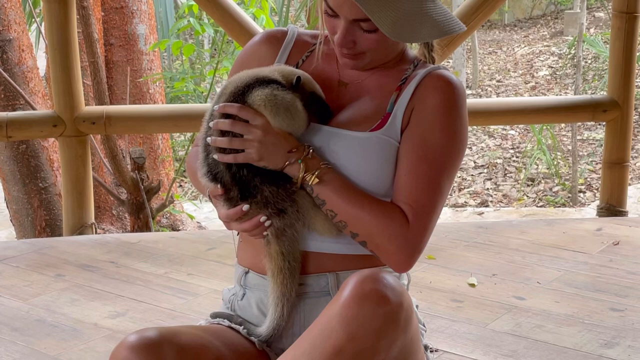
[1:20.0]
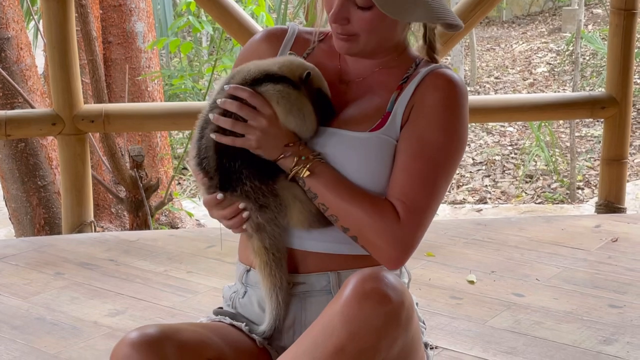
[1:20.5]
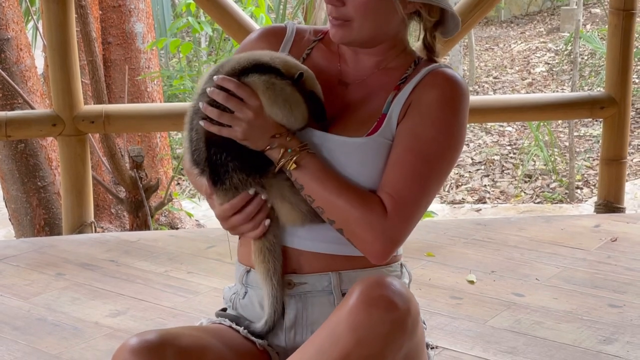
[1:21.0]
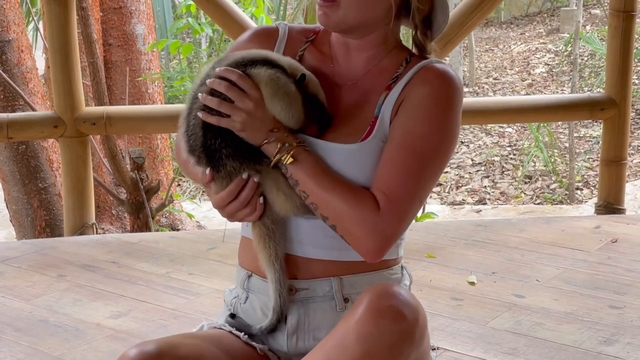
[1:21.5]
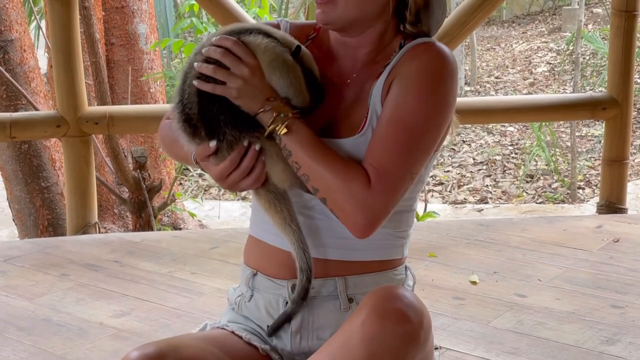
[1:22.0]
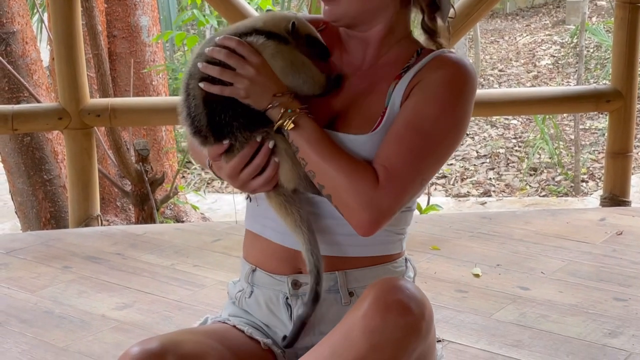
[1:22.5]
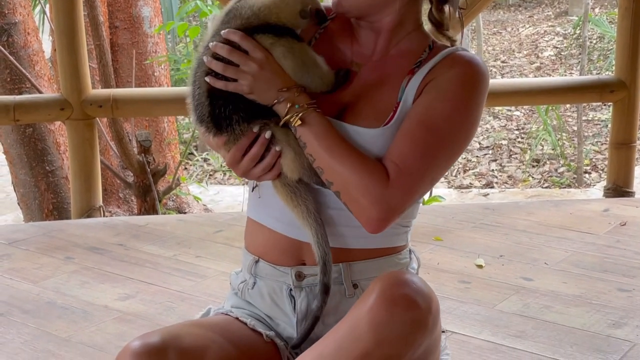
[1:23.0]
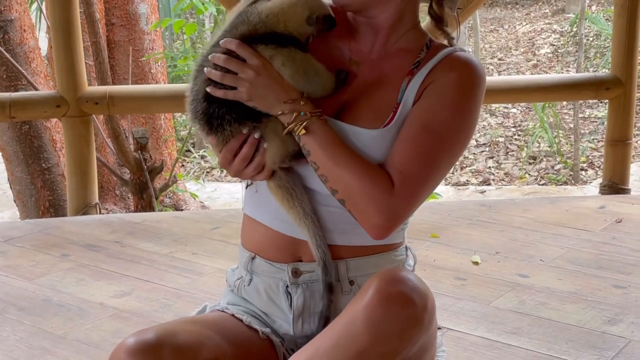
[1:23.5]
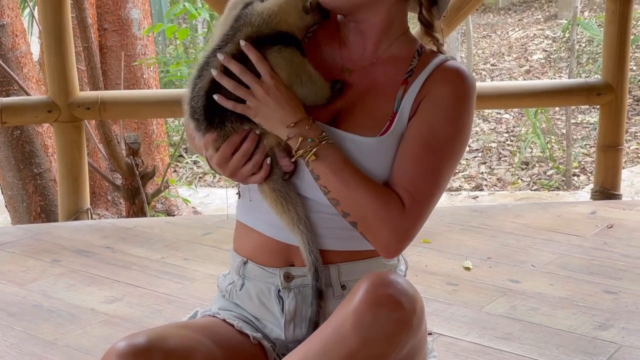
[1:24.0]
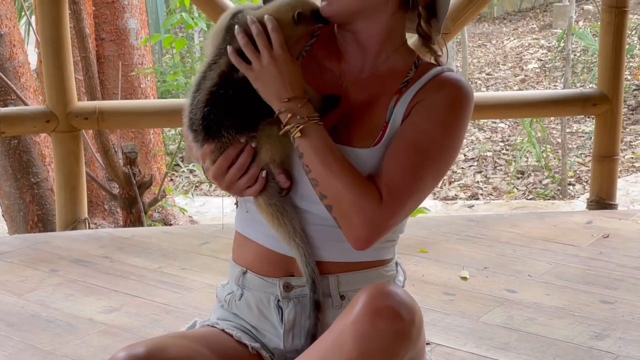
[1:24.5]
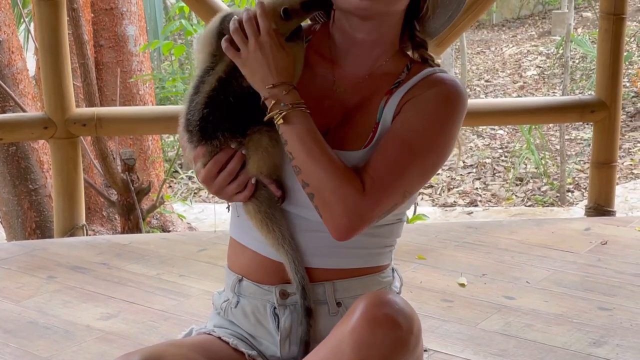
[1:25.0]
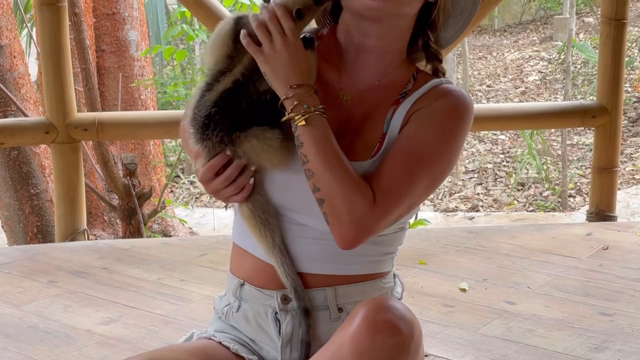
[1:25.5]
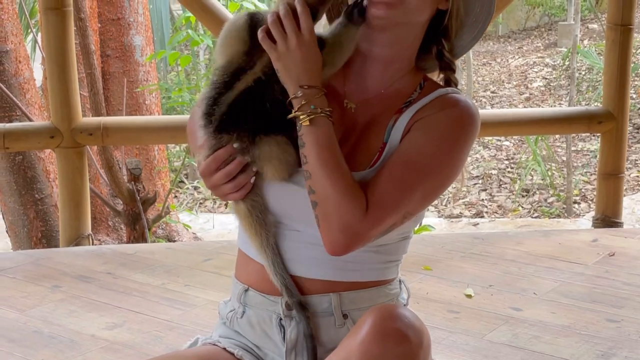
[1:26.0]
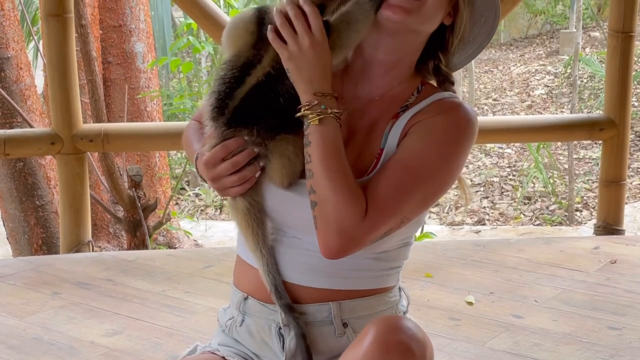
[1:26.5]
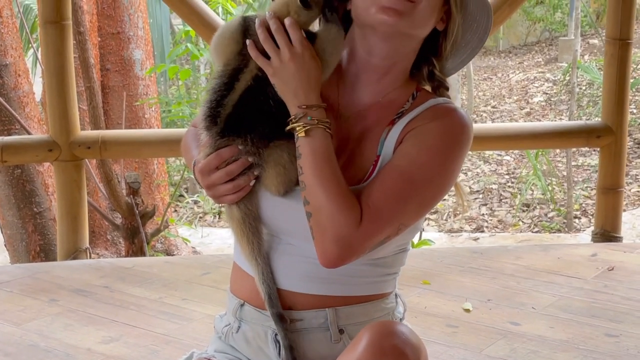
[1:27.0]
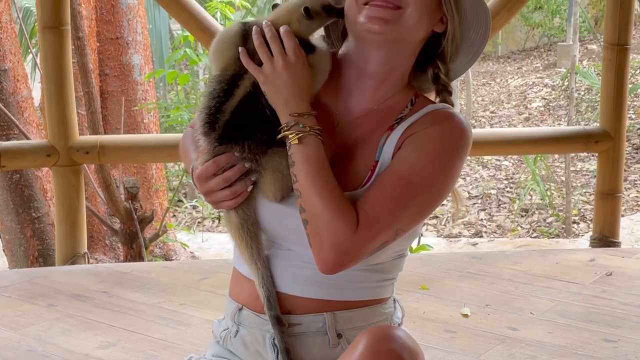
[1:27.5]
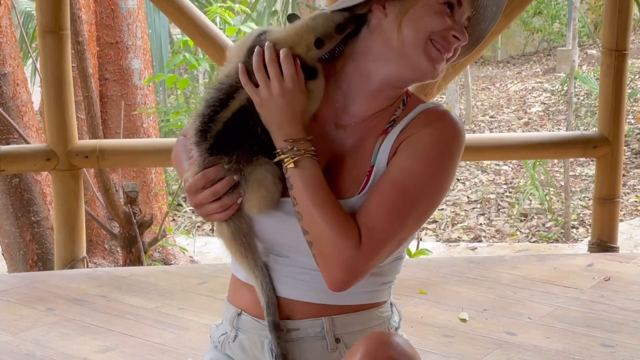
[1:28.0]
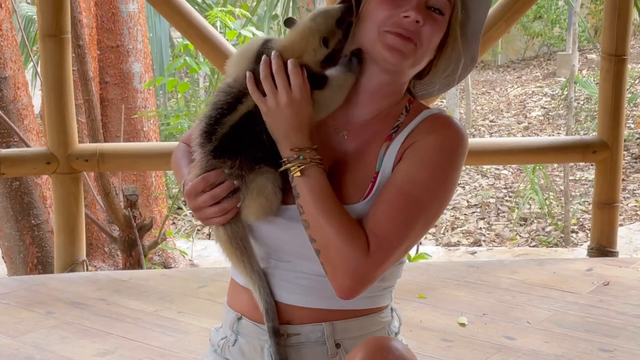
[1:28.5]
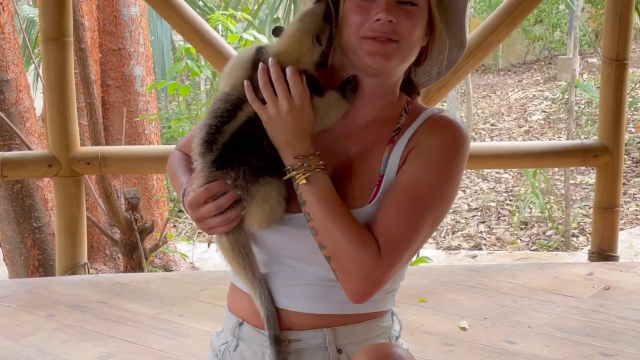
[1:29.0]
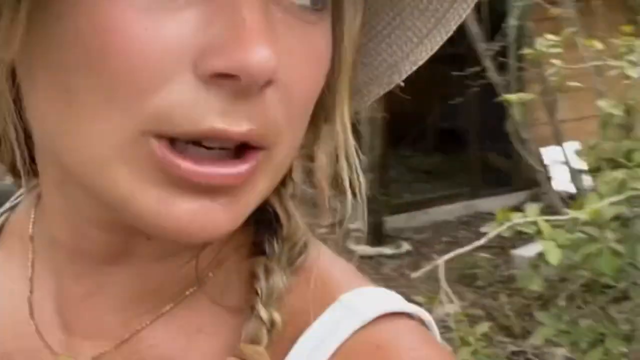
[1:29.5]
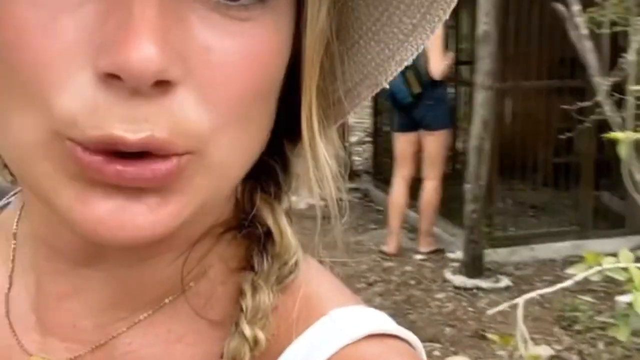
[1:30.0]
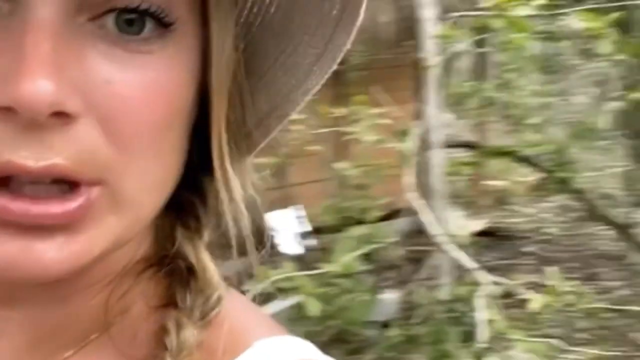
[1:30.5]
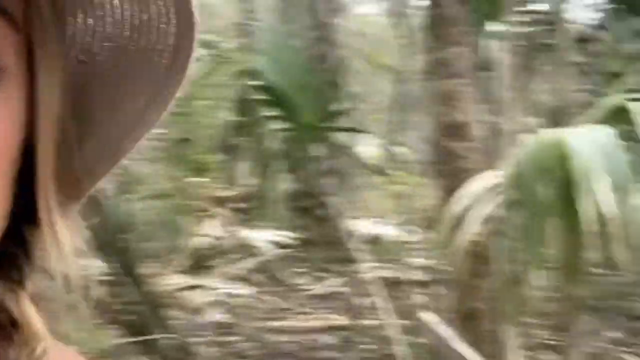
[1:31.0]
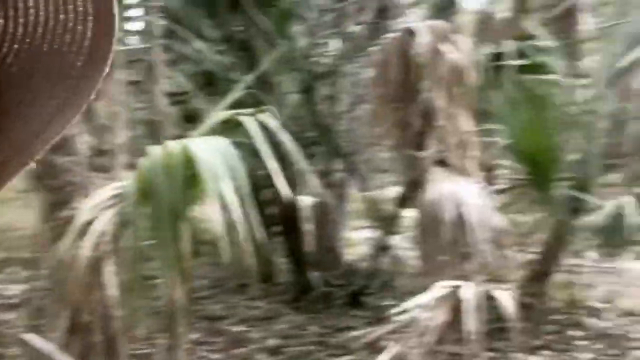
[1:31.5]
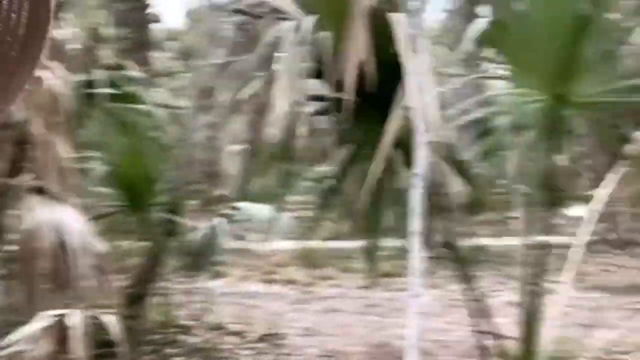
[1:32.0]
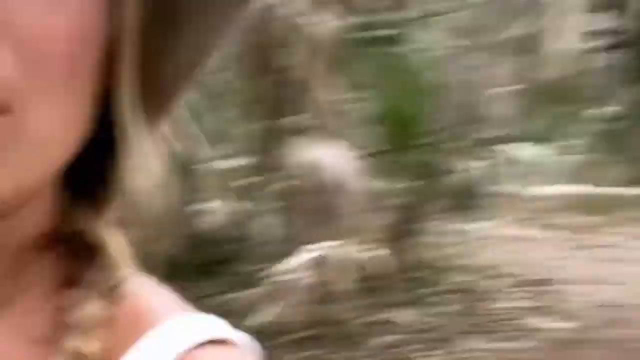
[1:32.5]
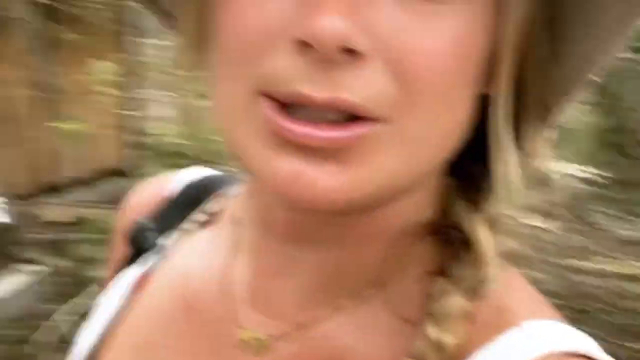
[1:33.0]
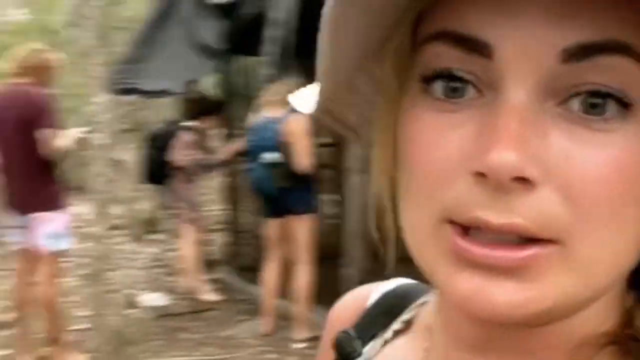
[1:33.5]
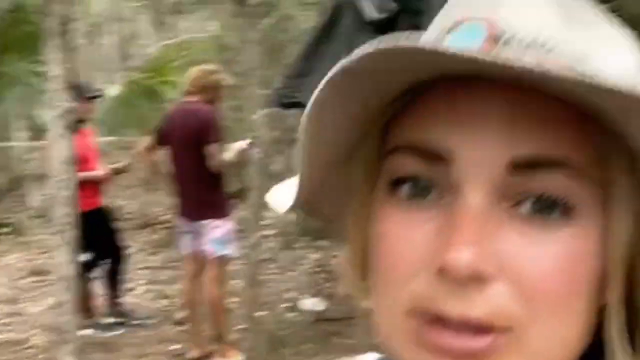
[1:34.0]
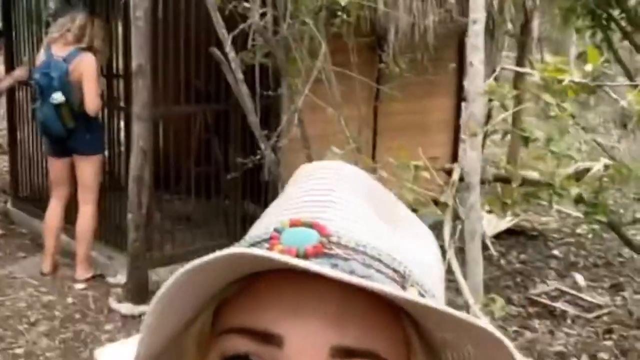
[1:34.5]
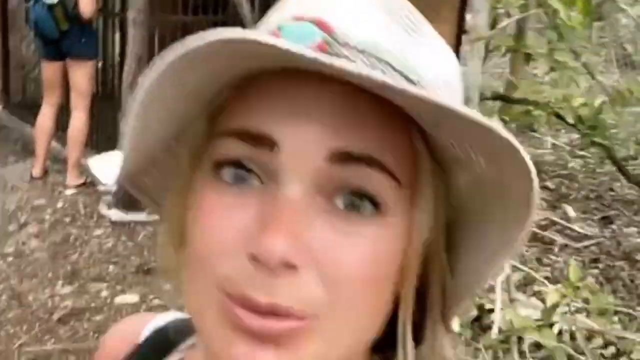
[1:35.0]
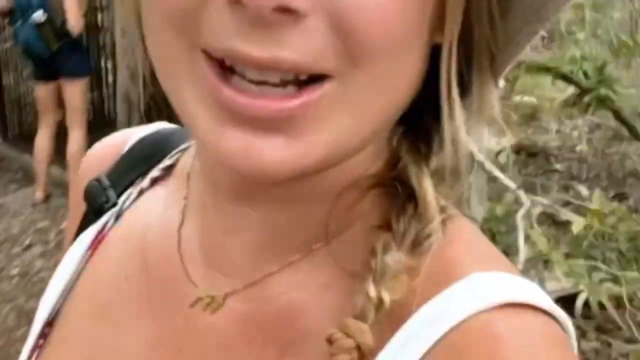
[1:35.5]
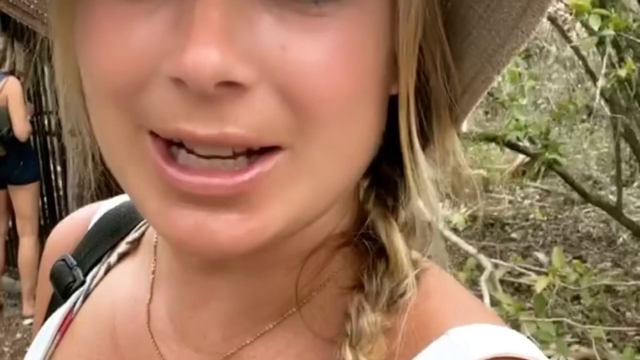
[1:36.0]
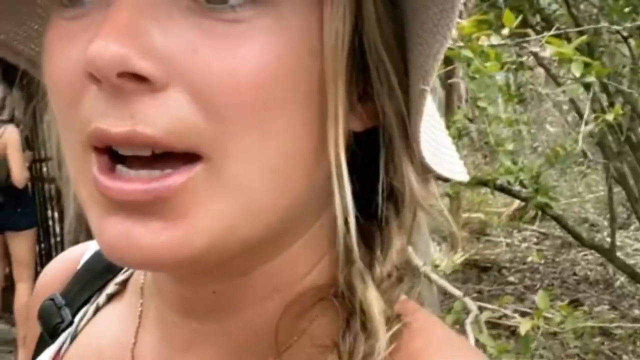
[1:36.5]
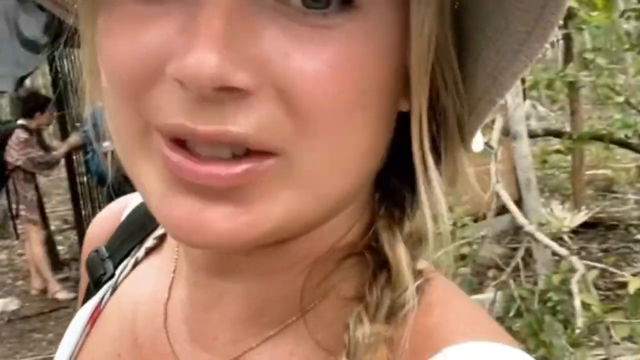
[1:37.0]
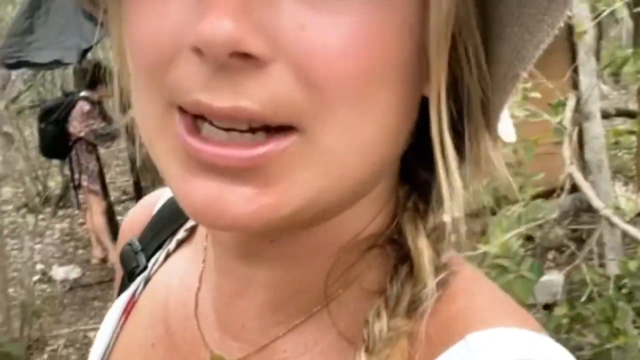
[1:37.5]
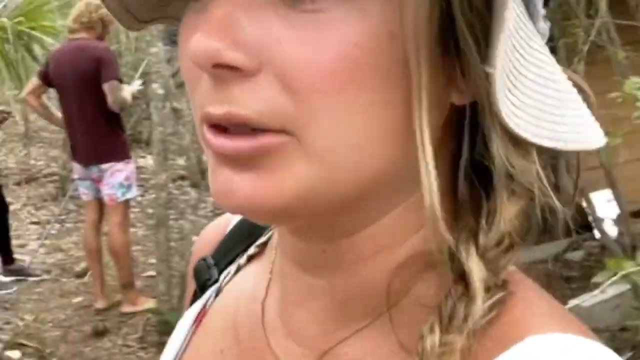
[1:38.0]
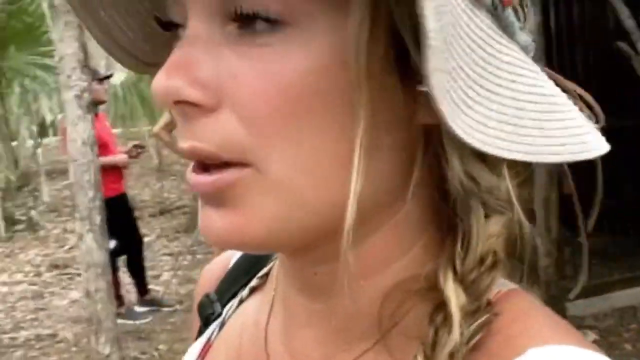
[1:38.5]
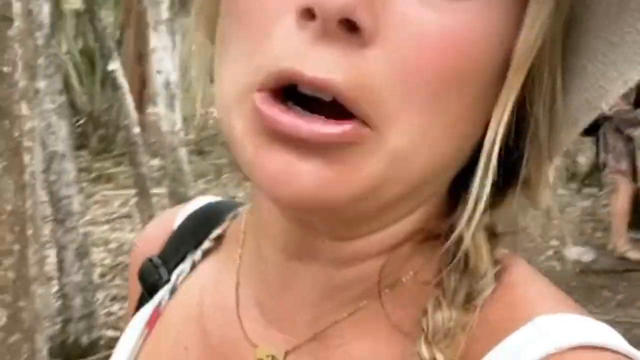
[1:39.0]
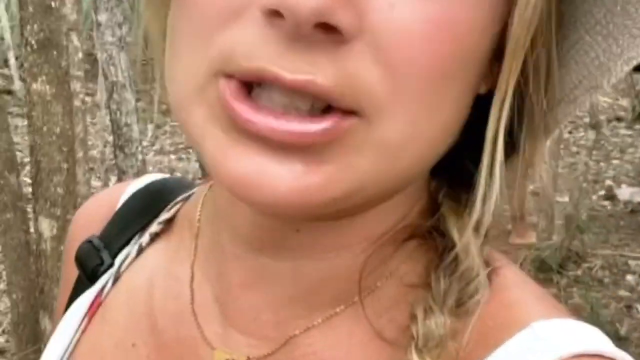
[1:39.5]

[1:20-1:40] A woman sits down holding a tiny animal that climbs on her and scratches her face, and seems to try to kiss her. Next, she is in an area with other people that looks like a forest. She holds the camera, which moves as she films all around where they are standing. The place looks like a zoo, a forest-like place with different kinds of animals, and she grabs and holds some of the animals and puts tiny kittens on her lap.